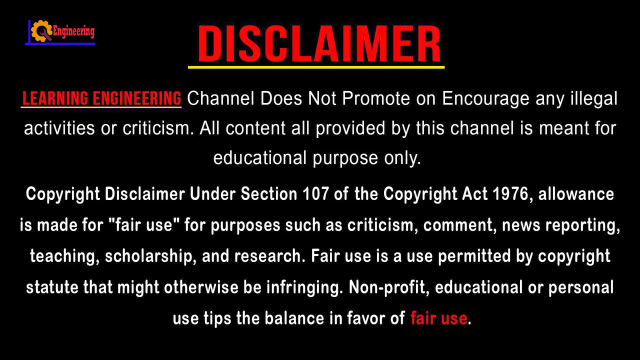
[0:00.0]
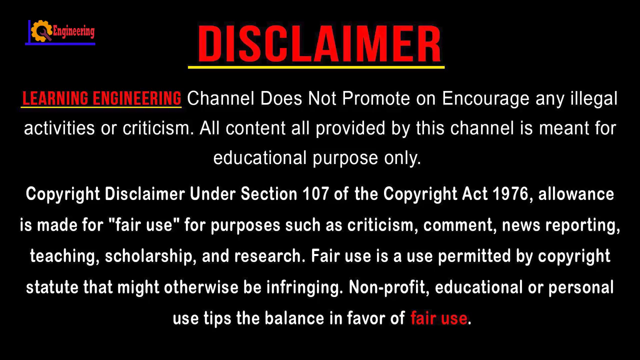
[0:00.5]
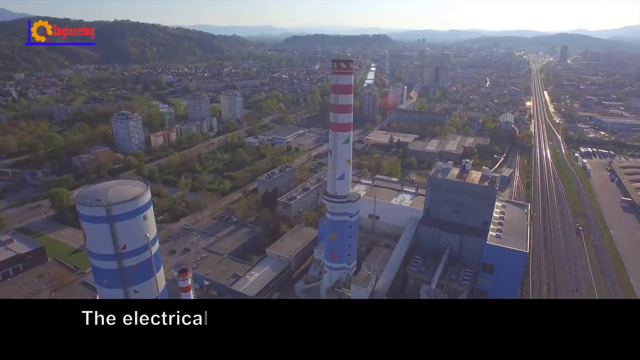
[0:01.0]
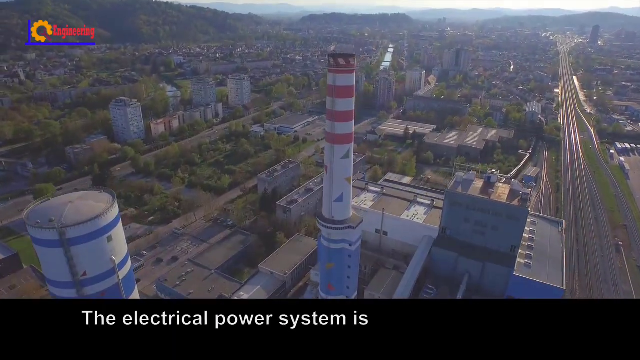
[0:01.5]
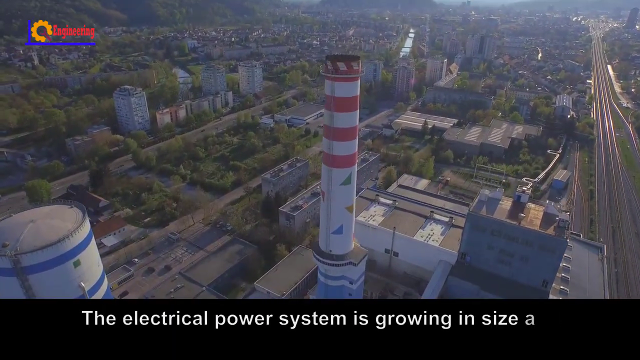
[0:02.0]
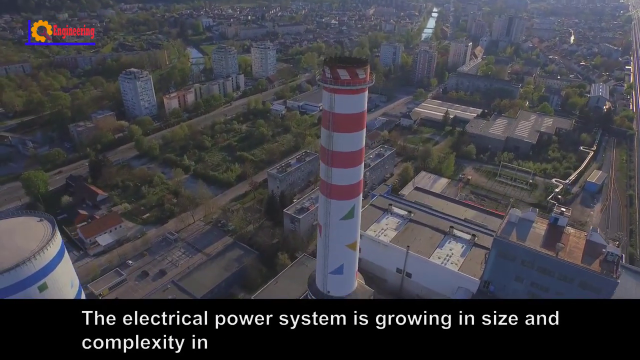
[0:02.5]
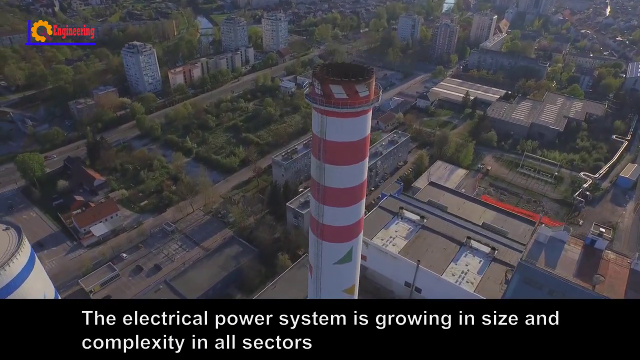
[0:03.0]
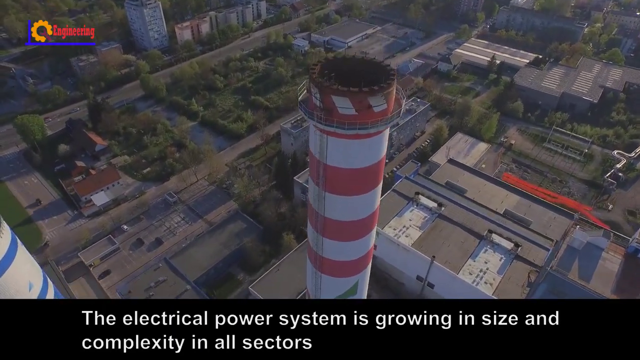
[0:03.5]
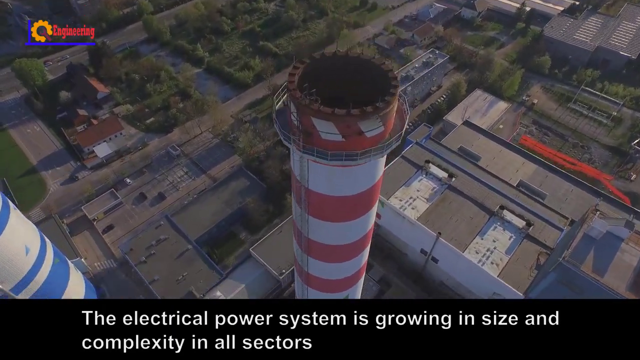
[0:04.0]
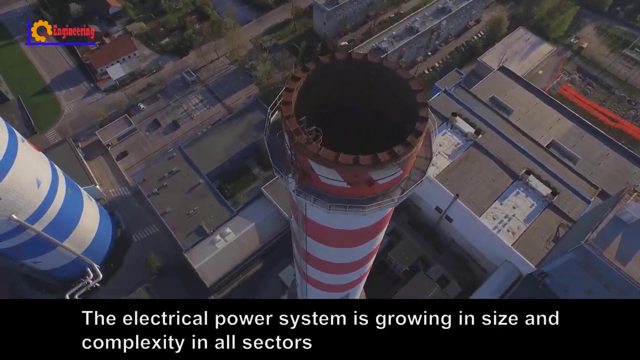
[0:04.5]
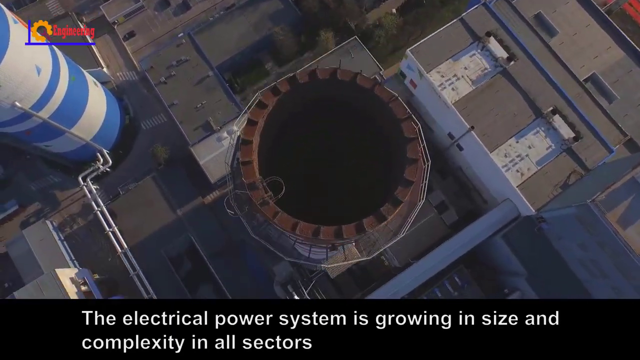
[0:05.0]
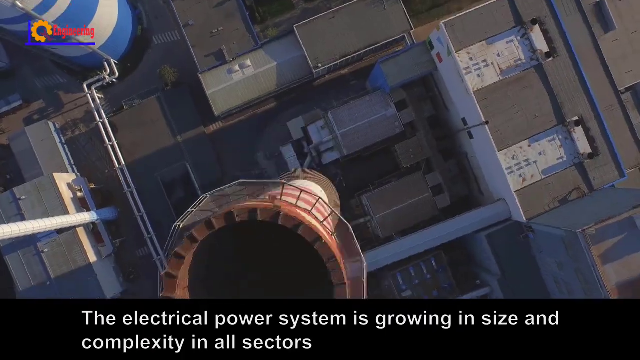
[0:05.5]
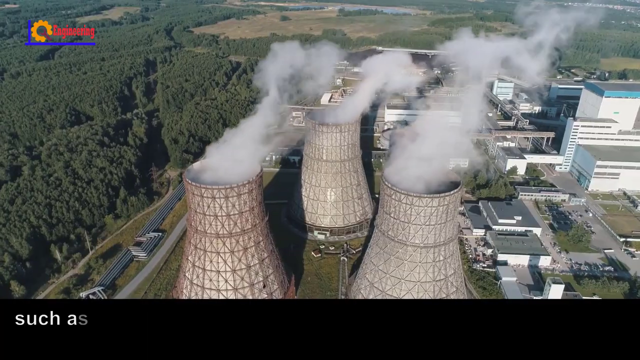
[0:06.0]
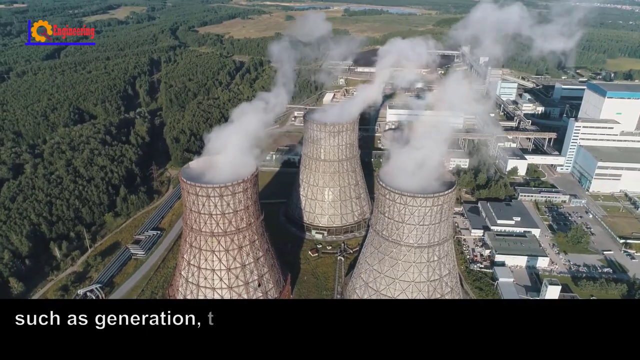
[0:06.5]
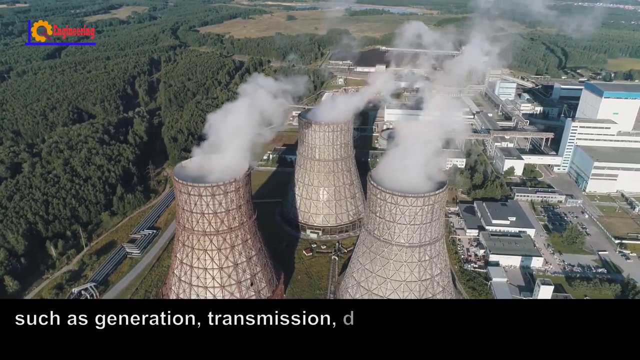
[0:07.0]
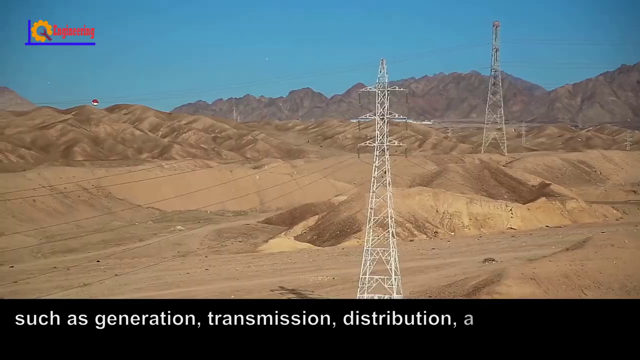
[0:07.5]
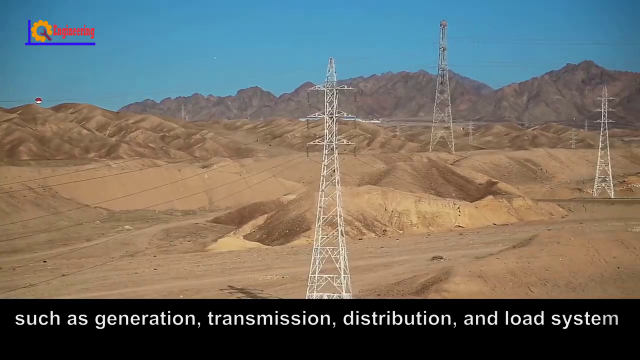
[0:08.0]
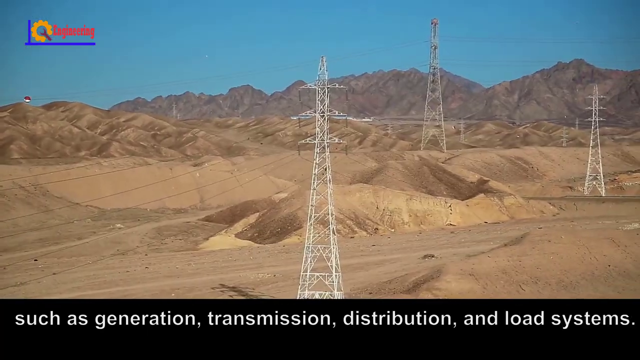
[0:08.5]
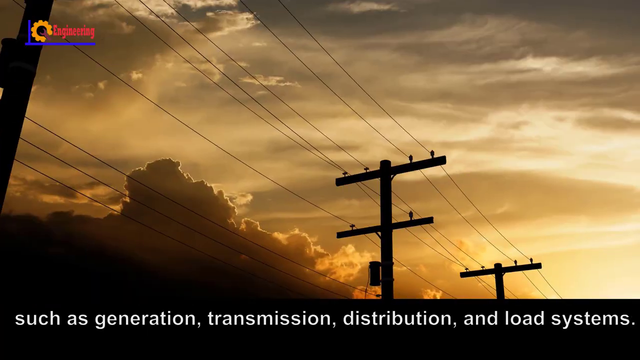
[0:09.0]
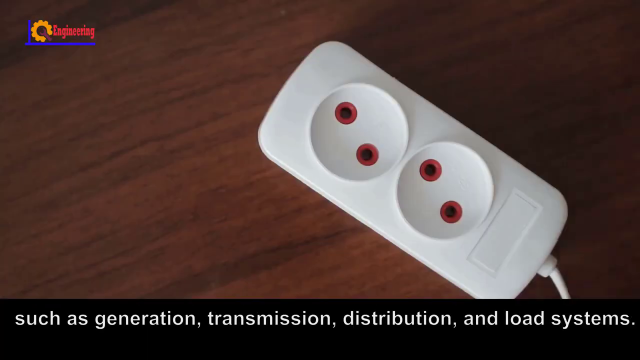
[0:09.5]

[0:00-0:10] The video opens with a disclaimer, a kind of legal warning for engineering. Next comes a wide shot of what looks like a power plant, followed by a possible nuclear plant, then power cable lines in a desert and power cable lines in a city. The sequence ends with a standard device being plugged into a surge protector outlet.